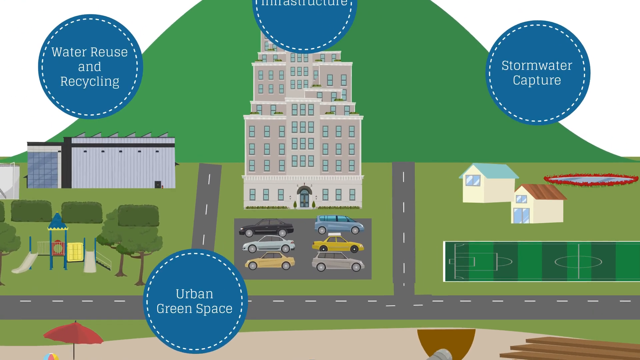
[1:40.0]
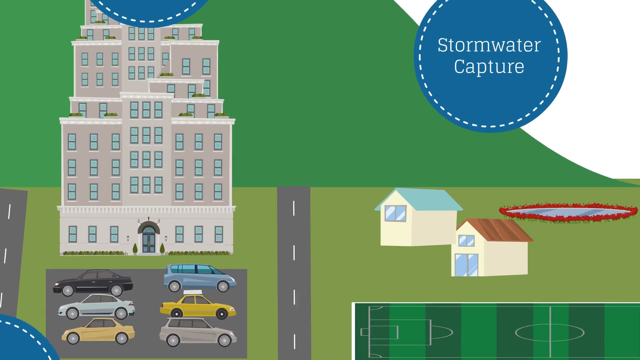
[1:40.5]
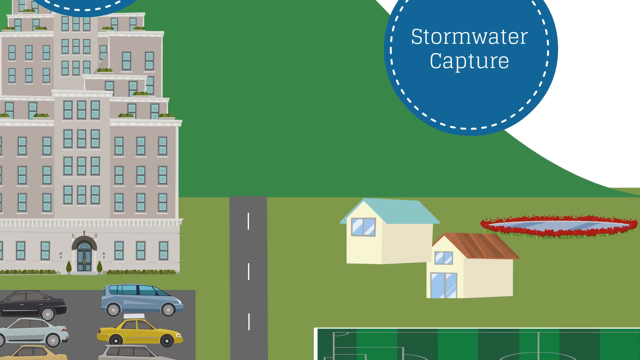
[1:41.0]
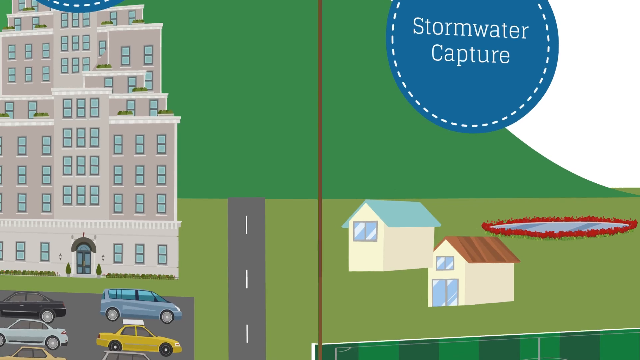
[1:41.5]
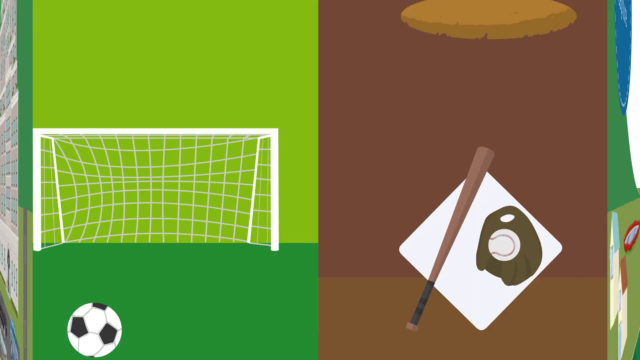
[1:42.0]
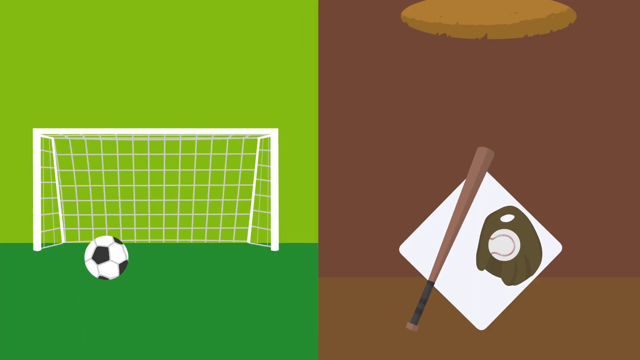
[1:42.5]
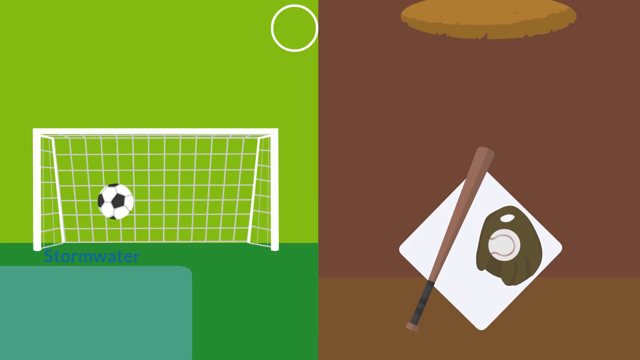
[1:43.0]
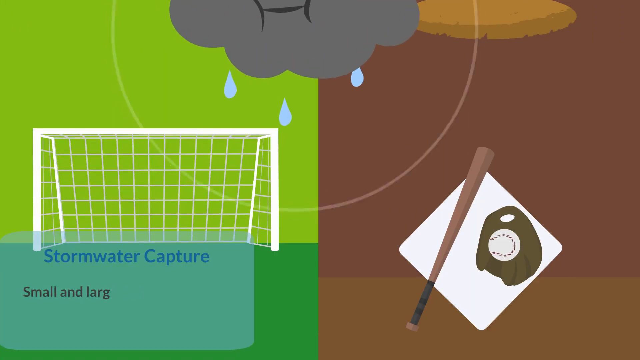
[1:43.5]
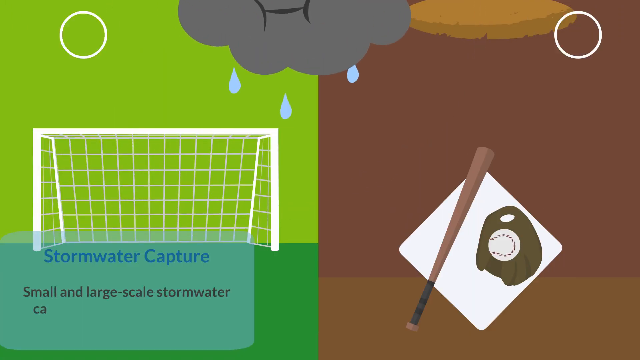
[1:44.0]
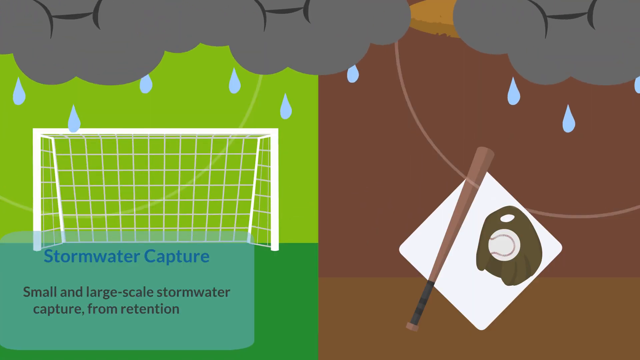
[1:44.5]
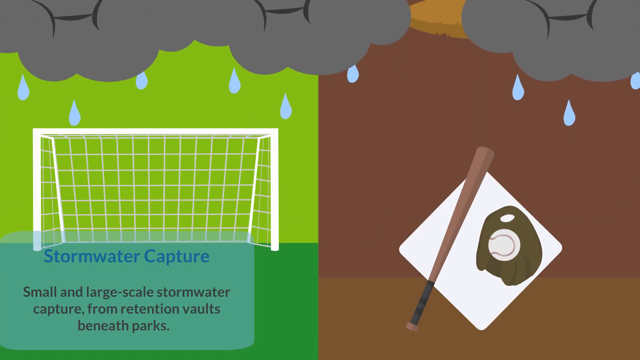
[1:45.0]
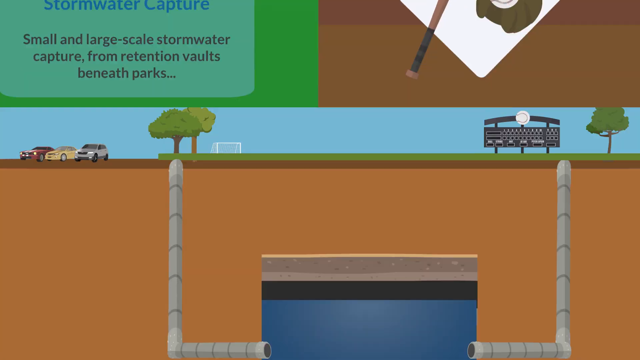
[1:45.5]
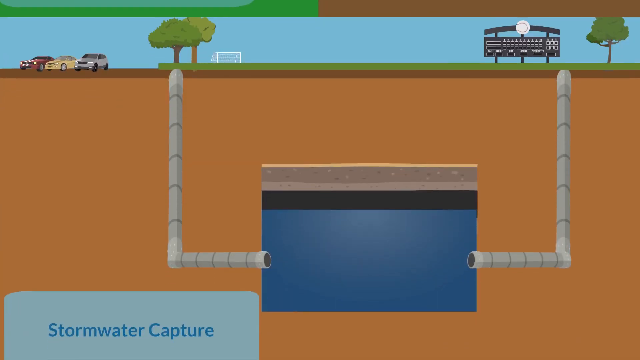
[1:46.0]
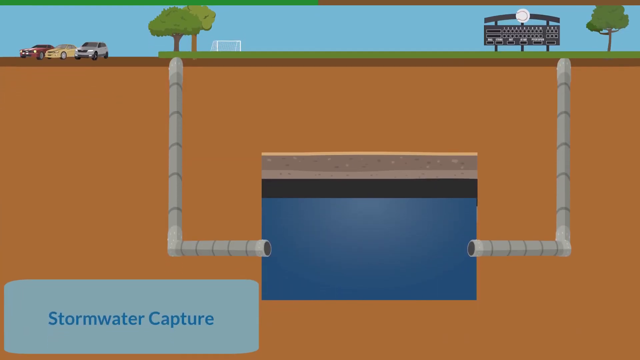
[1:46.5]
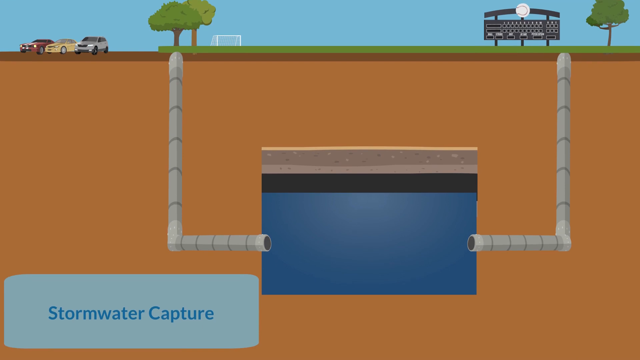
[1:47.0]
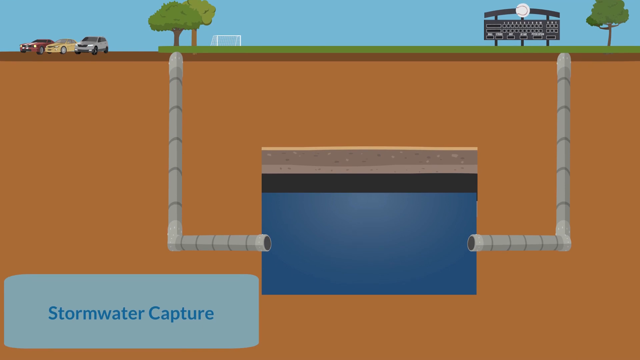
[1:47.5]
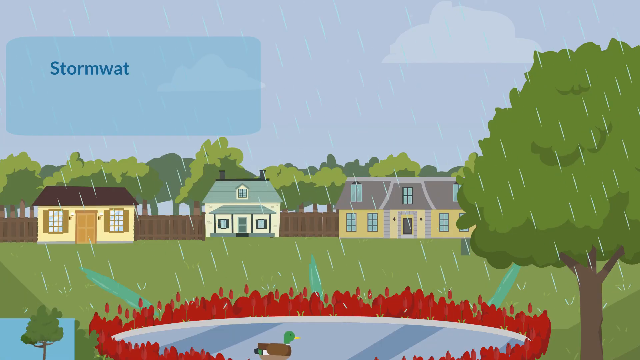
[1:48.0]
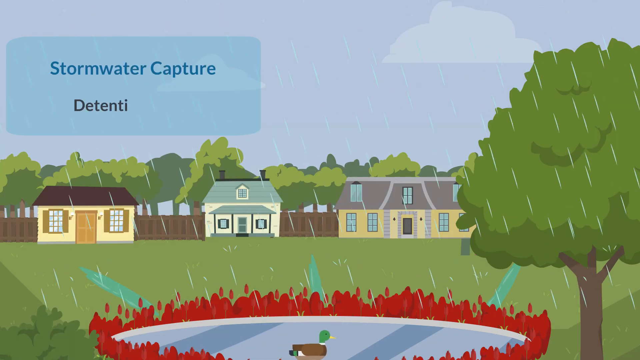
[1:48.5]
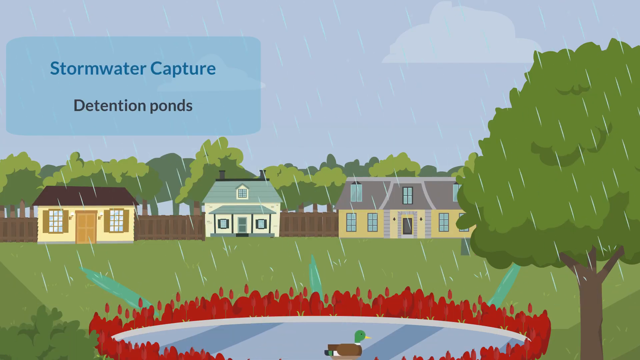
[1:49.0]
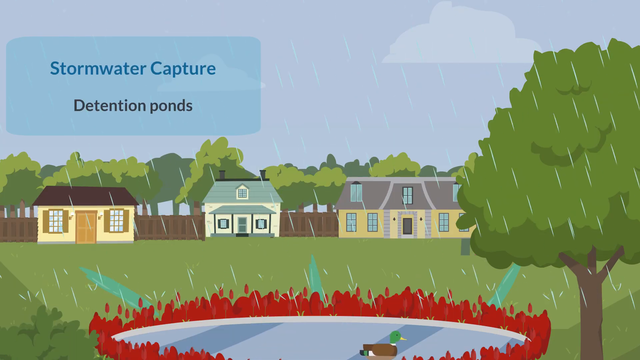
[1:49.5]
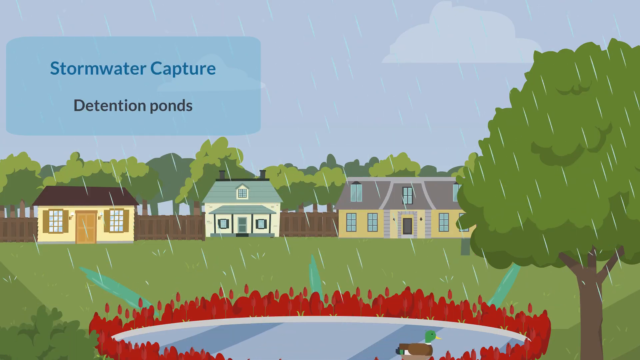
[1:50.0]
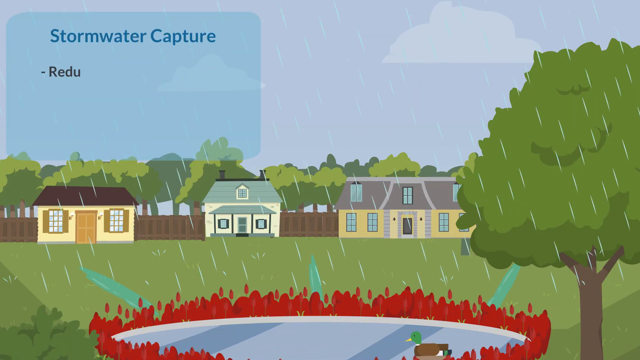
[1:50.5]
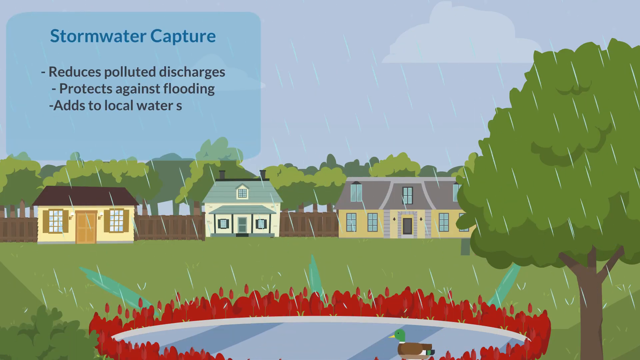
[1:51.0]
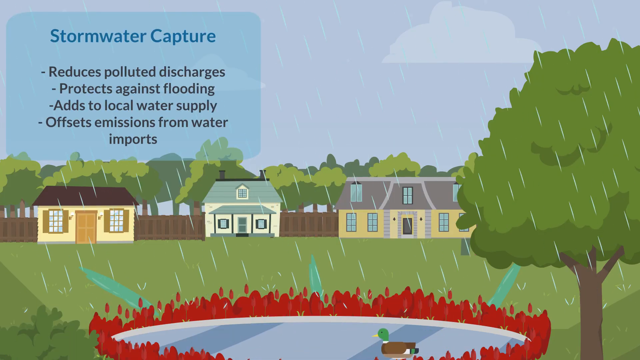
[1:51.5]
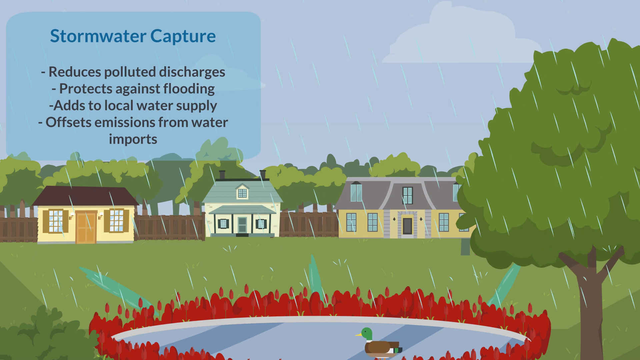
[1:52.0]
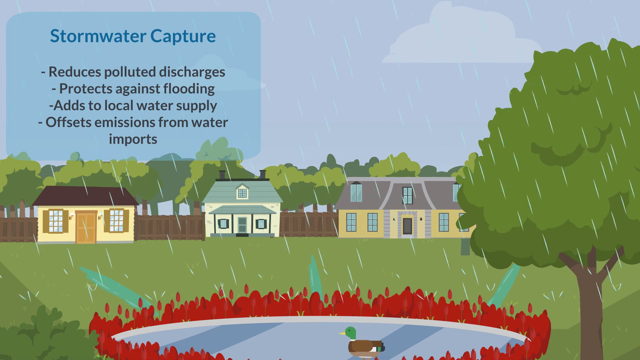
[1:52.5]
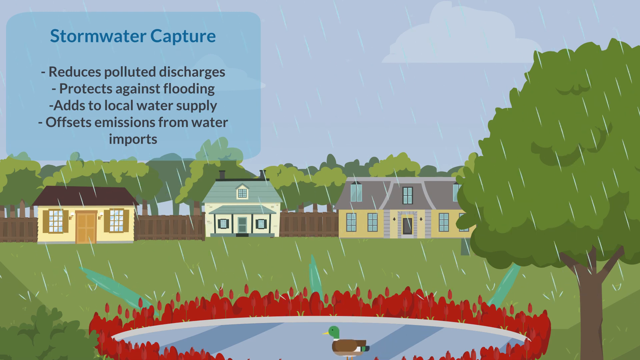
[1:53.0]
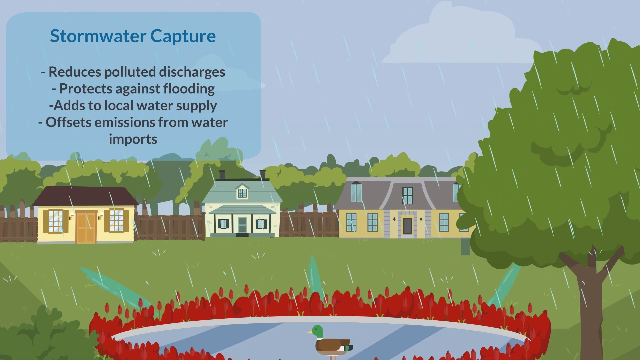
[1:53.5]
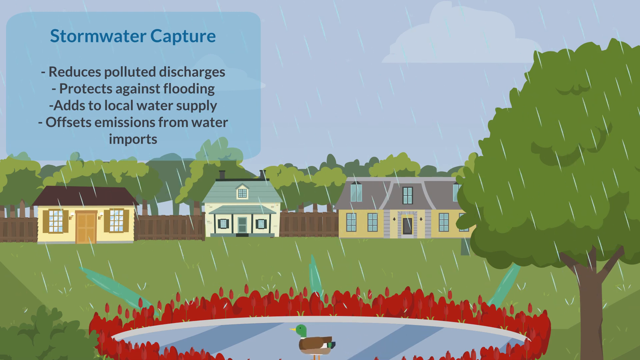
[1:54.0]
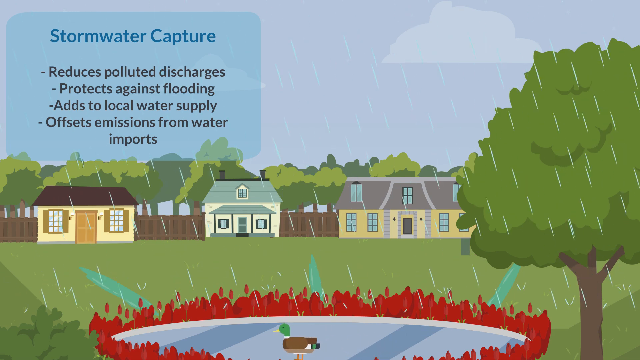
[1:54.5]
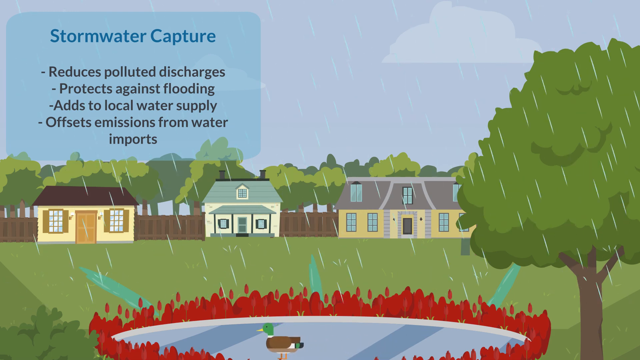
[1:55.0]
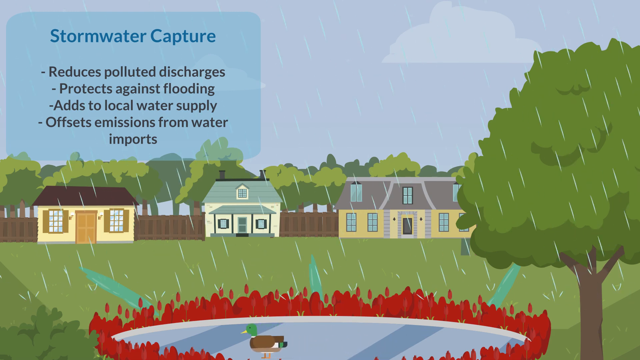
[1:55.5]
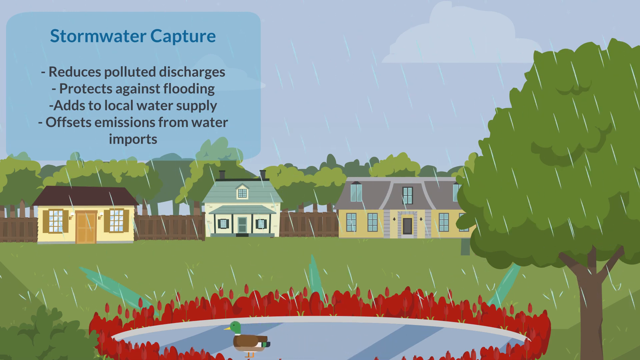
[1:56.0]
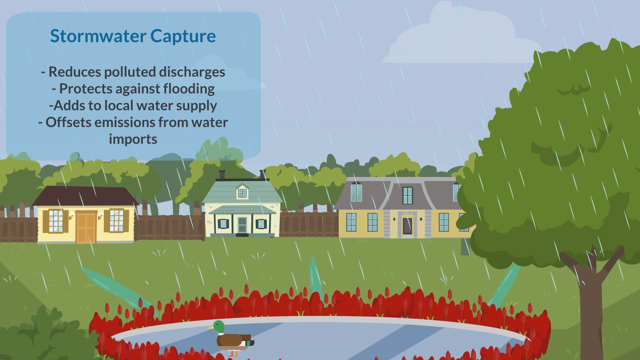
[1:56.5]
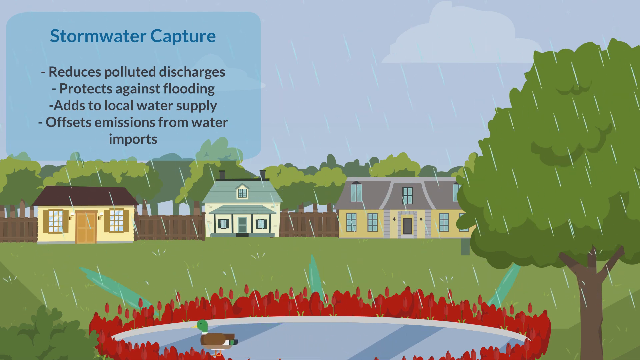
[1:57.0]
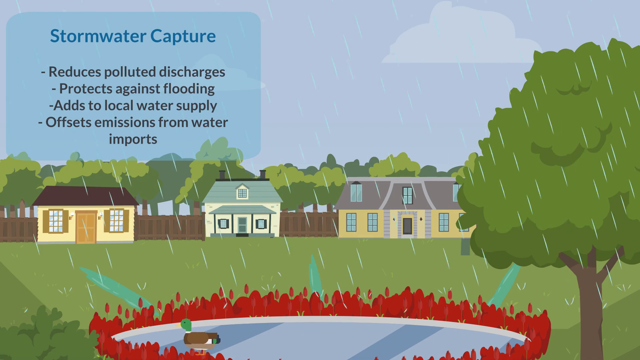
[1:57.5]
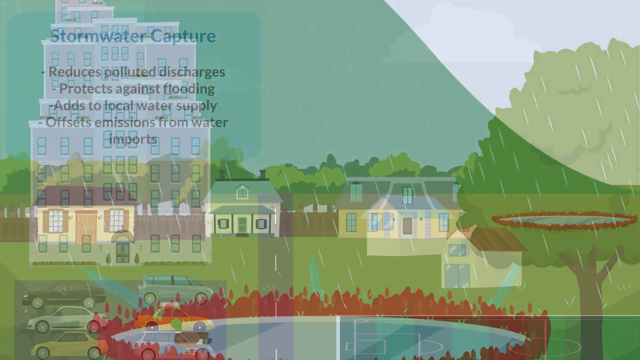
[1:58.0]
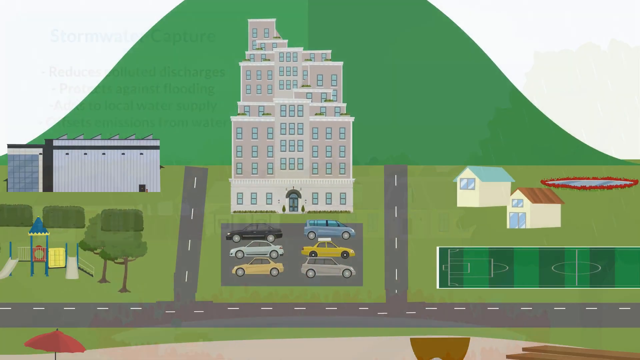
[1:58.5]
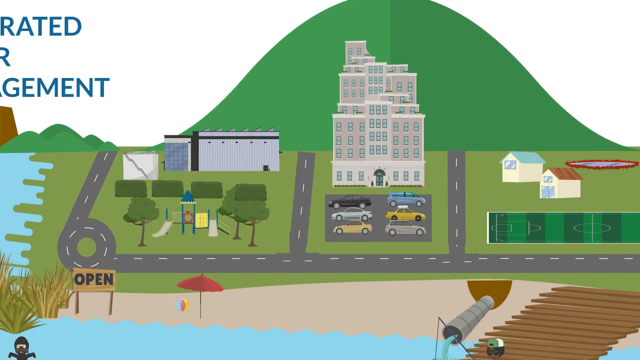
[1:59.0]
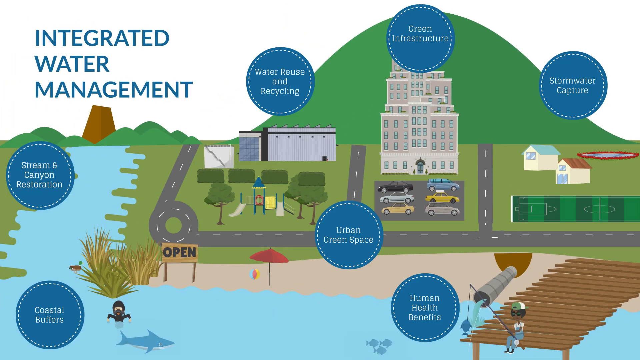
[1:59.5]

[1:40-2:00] "Stormwater Capture" appears, with a soccer ball on the left and a baseball on the right. Text reads "small and large scale stormwater capture from retention vaults beneath parks." Gray clouds fill the sky, and then a whole bunch of raindrops come down. The next scene shows a park with trees and a parking lot, and then what happens underground: two drains run from the top all the way down underground, showing how the water goes from the surface to underground. Rain falls and text reads "stormwater capture detention ponds" over a setting of three homes and a pond. Text reads "stormwater capture reduces polluted discharges, protects against flooding, adds to local water supply, offsets emissions from water imports." It is raining pretty hard.